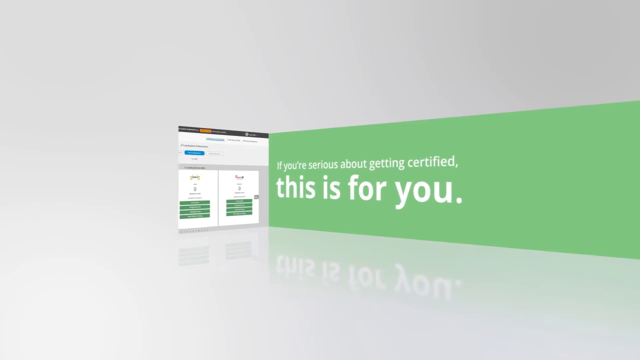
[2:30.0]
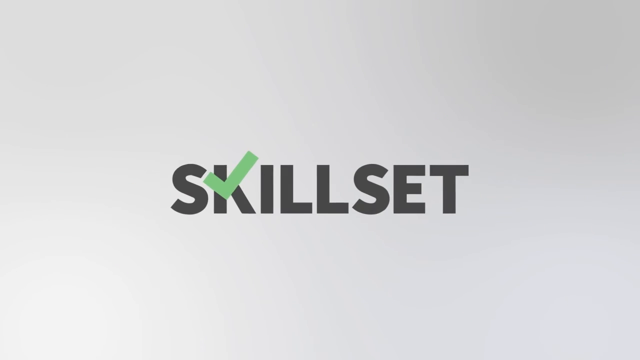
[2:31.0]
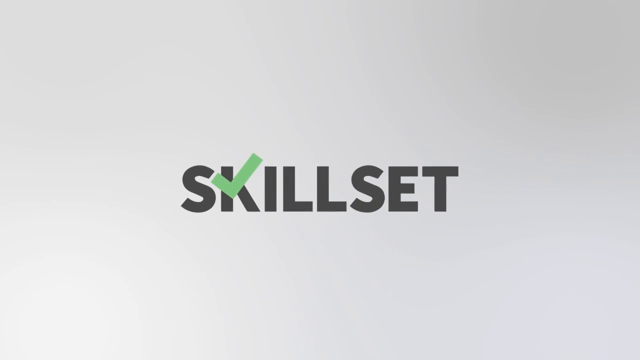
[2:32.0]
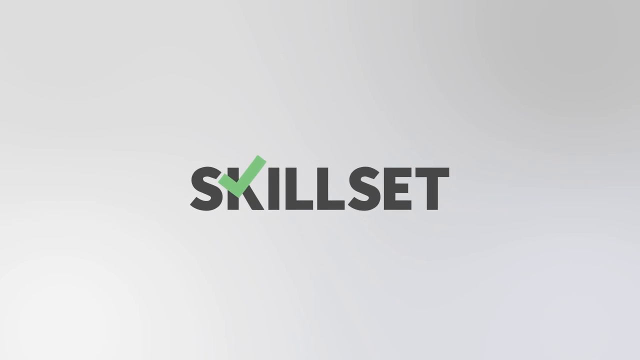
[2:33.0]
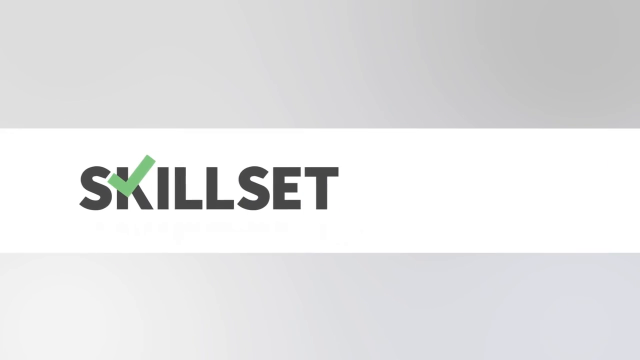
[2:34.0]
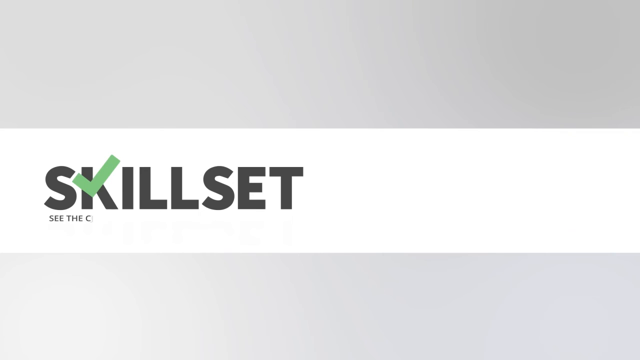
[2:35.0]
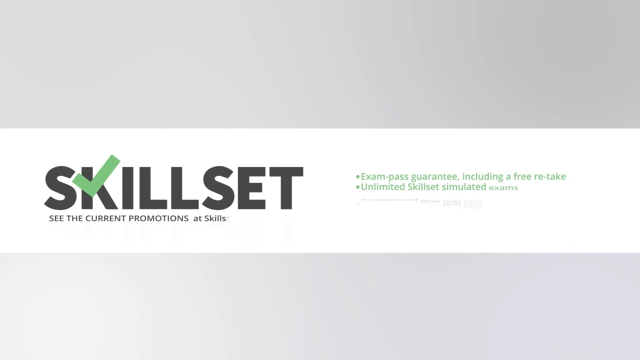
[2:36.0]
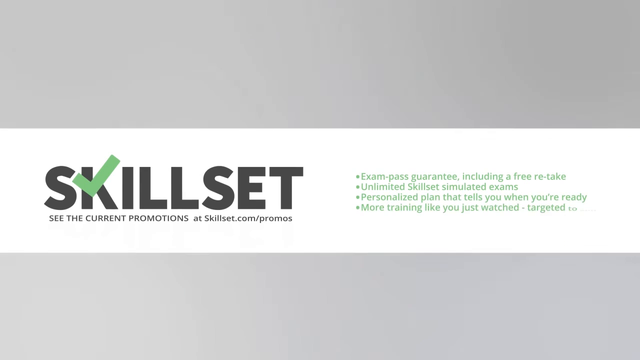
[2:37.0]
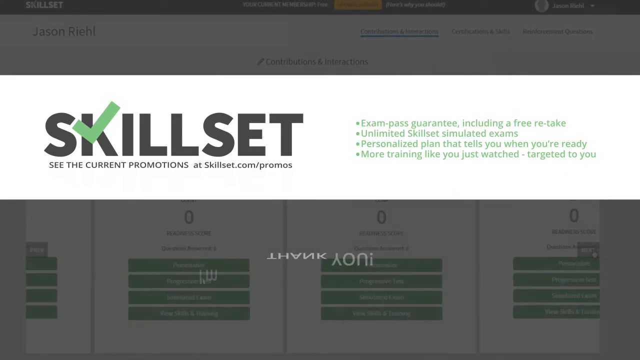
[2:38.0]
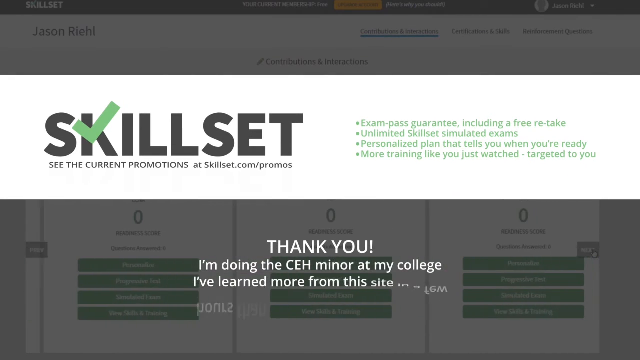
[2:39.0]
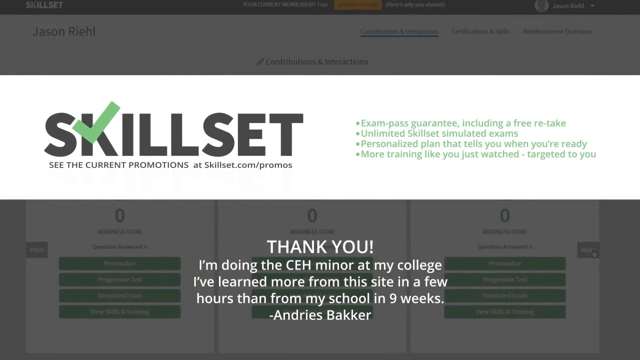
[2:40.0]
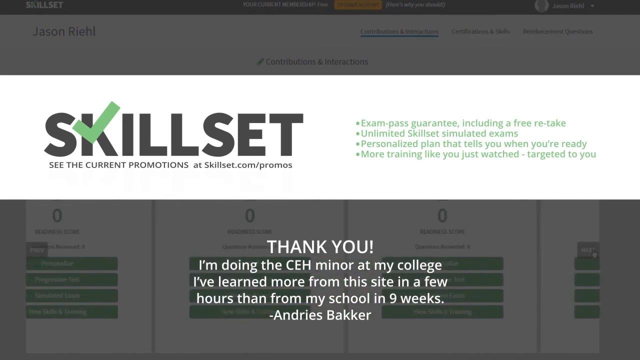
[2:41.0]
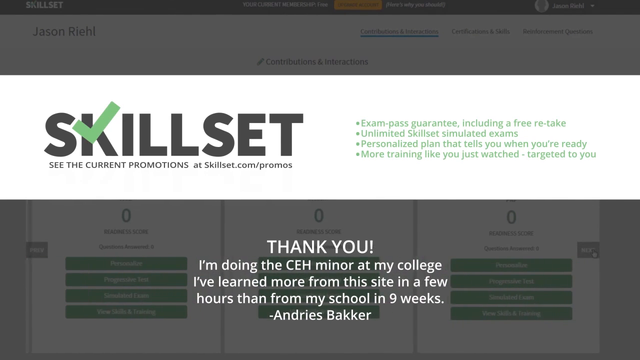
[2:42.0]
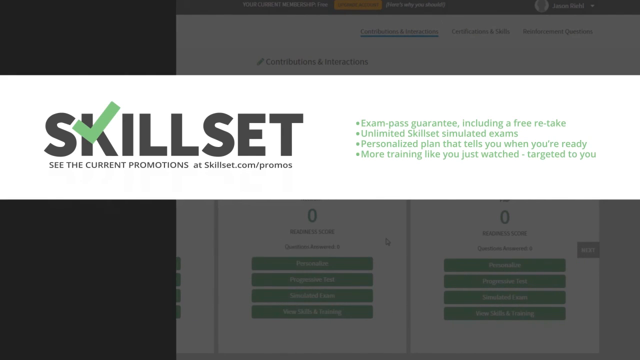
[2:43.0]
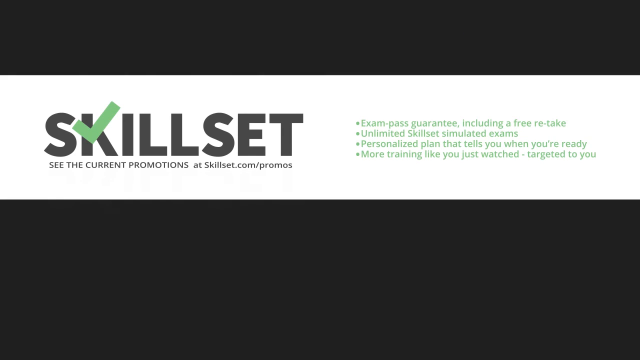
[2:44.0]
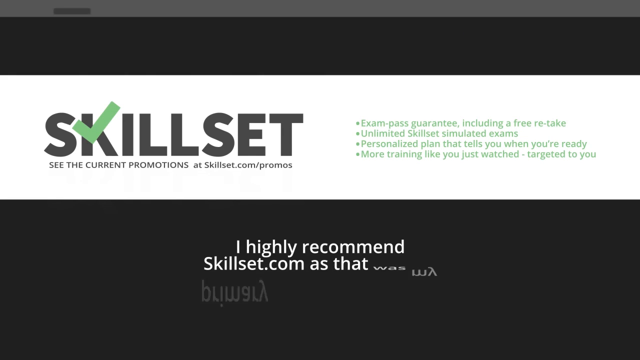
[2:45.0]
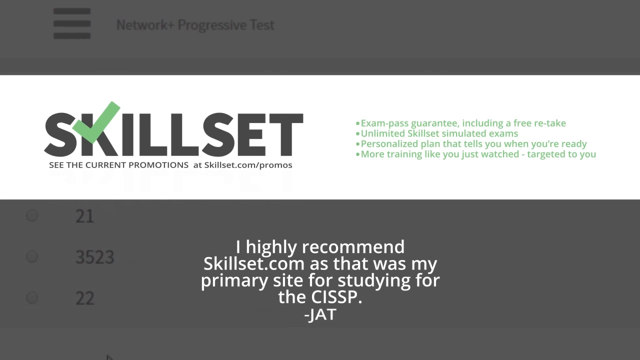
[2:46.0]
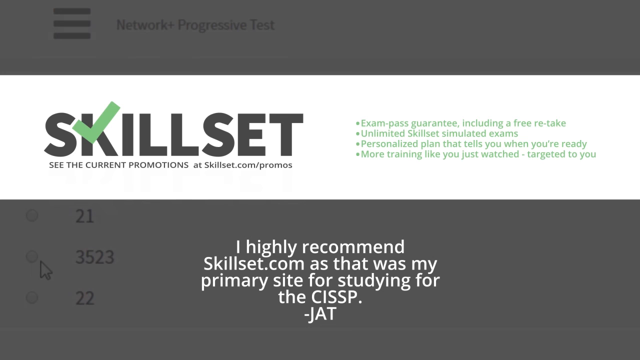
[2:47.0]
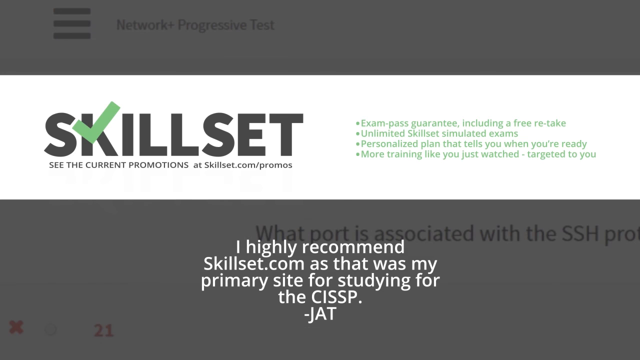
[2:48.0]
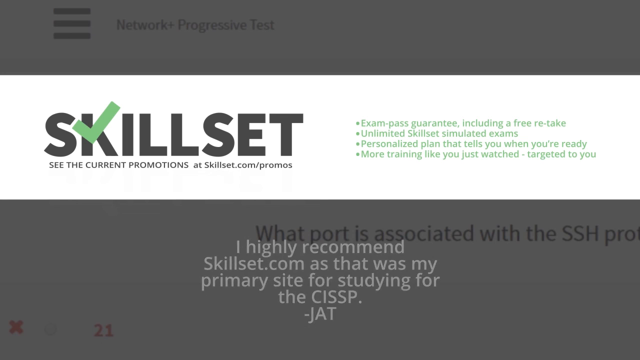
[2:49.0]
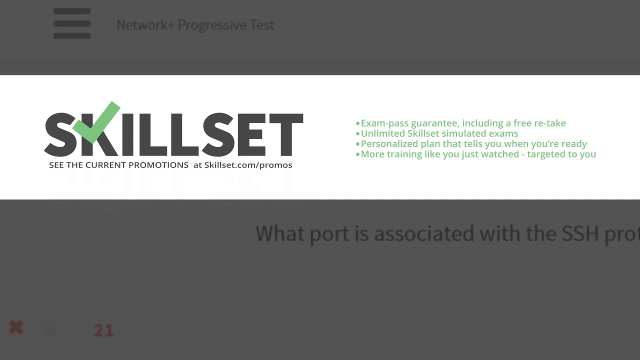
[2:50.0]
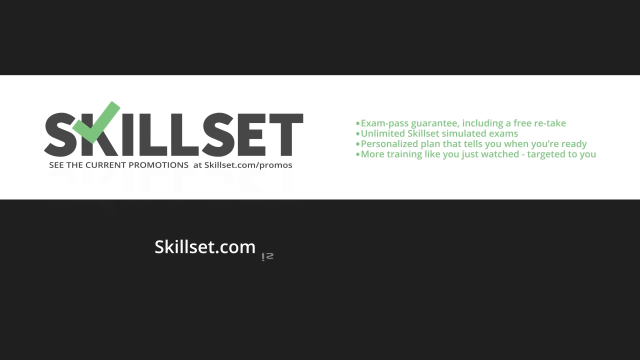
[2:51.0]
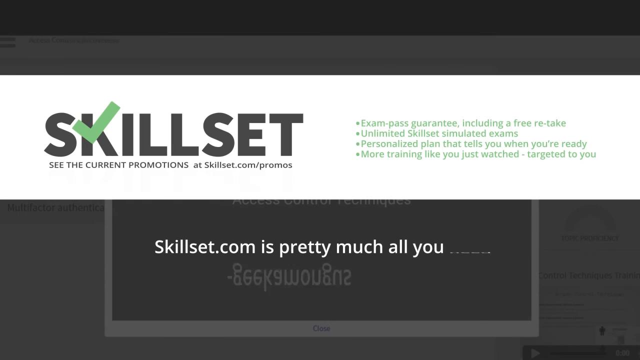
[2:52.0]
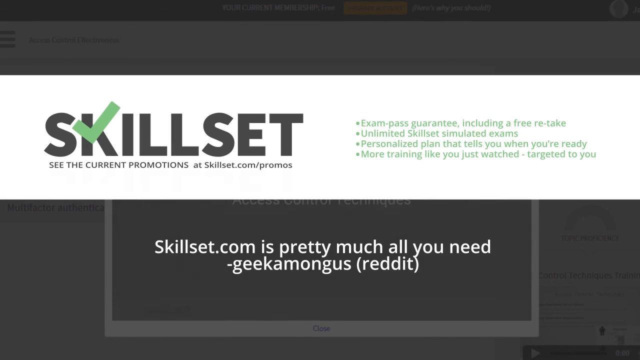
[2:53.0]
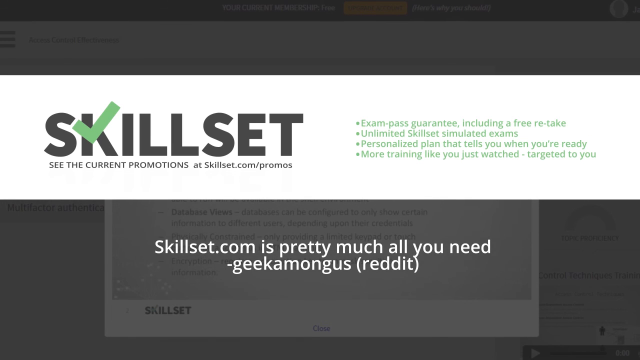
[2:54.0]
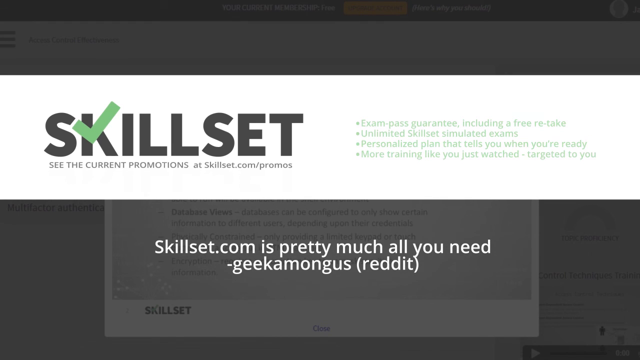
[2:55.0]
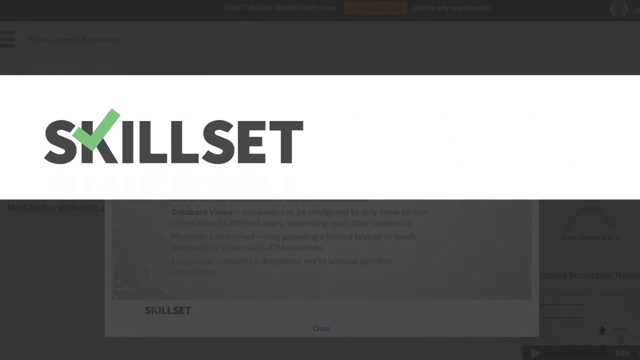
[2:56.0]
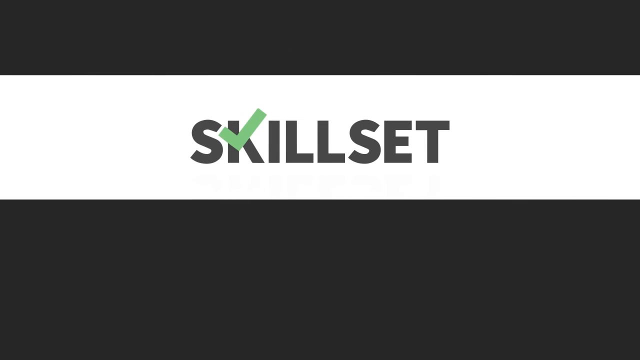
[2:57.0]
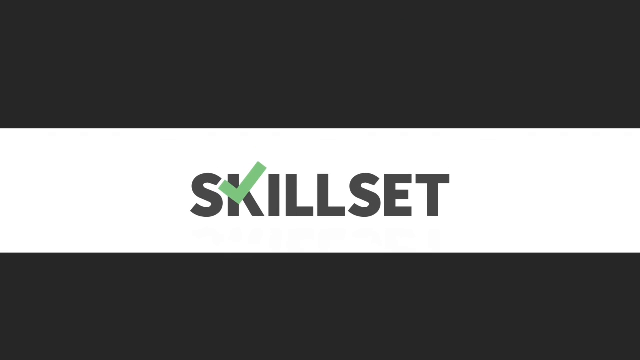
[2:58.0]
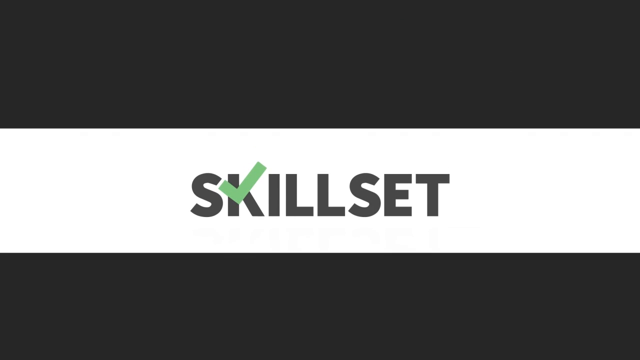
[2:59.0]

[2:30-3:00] The title on the black rectangle slowly transitions to the green on the right side, where "this is for you" appears in a much bigger white font than the smaller text above it. On the left side, closer to the dark grayish object, is an illustration of the website. The animation then changes to a green and dark grey title sequence: a large dark bold "skill set" pops up, mostly in dark greyish font, with the K partially filled by a green check. The title gets slightly smaller as the animation goes on, and a white rectangle fills in behind it across the video like a stripe. Words pop up inside the white stripe. Under Skillset it says "see the current promotions at skillset.com/promos", and four points in green lettering on the right read "exam pass guarantee, including a free retake", "unlimited skillset simulated exams", "personalized plan that tells you when you're ready", and "more training like you just watched - targeted to you". Next, "Thank you!" appears in white font, and below it, also in white, a quote reads "I'm doing the CEH minor at my college. I've learned more from this site in a few hours than my school in nine weeks.", attributed to Andreas Backer. The background is an illustration of the website shown earlier. As the background changes to different parts of the website, the text at the bottom changes to "I highly recommend skillset.com as that was my primary site for studying for the CISSP. - JAT", and then to "skillset.com is pretty much all you need - Geekamongus (Reddit)". At the end, a bold dark gray "skill set" with the green check forming part of the K appears on a white stripe over an overall black background.